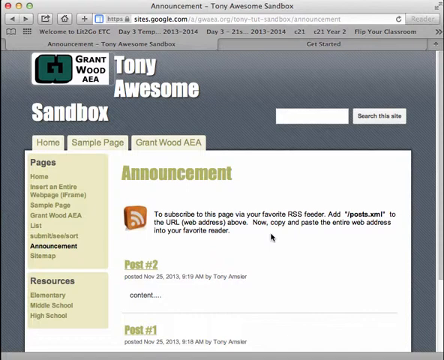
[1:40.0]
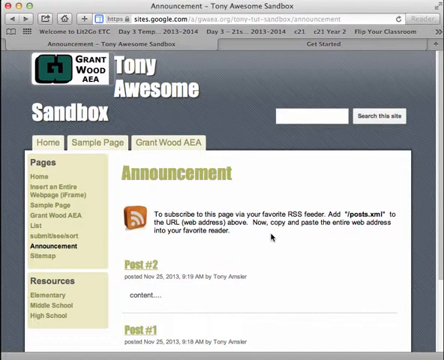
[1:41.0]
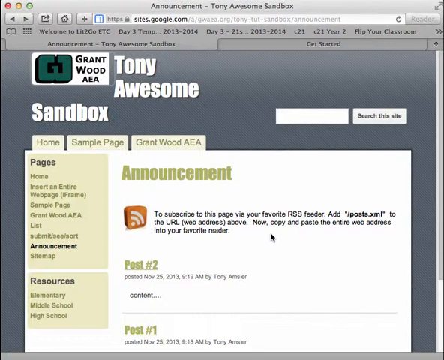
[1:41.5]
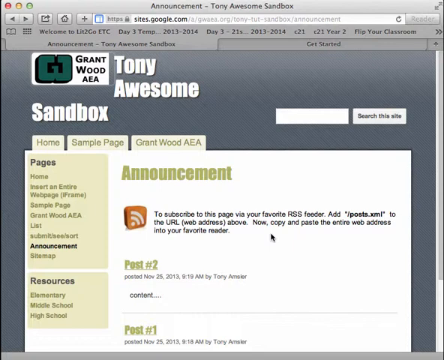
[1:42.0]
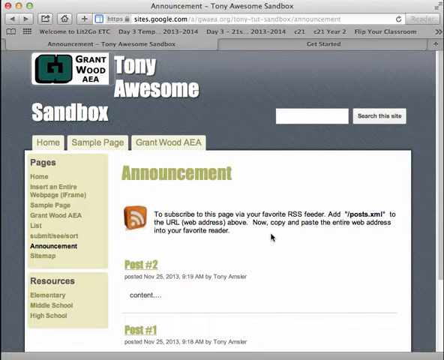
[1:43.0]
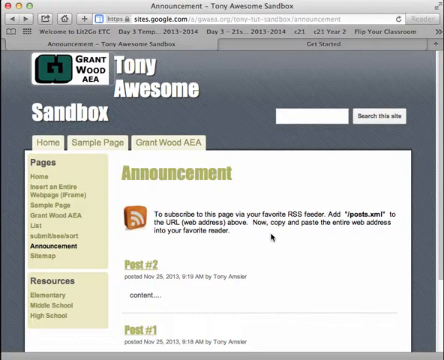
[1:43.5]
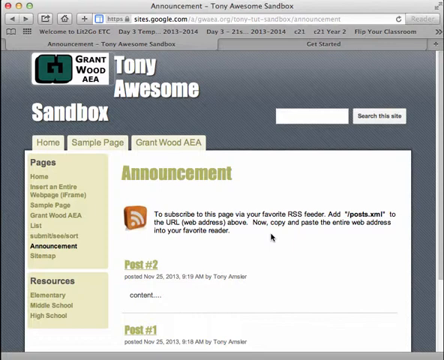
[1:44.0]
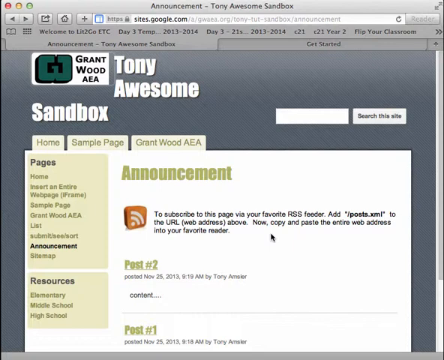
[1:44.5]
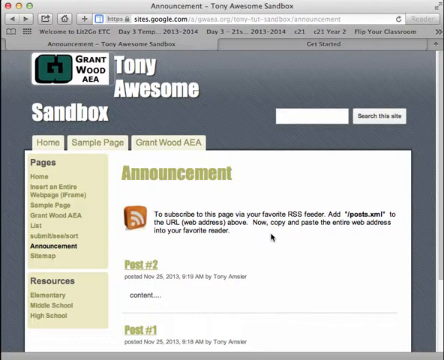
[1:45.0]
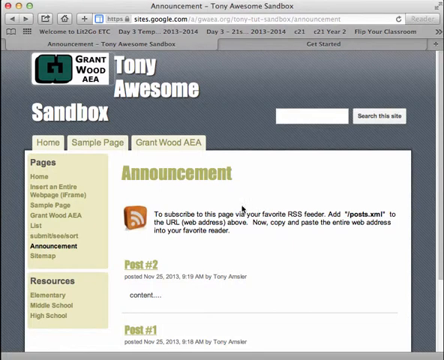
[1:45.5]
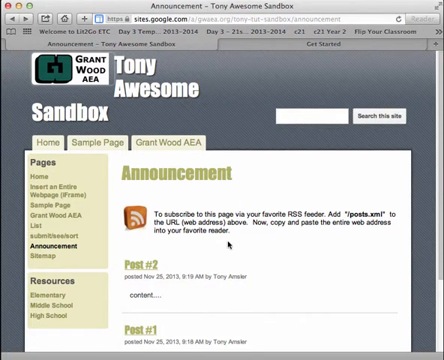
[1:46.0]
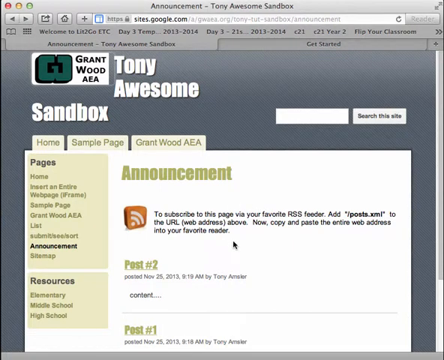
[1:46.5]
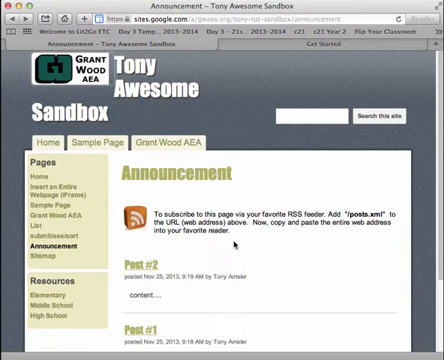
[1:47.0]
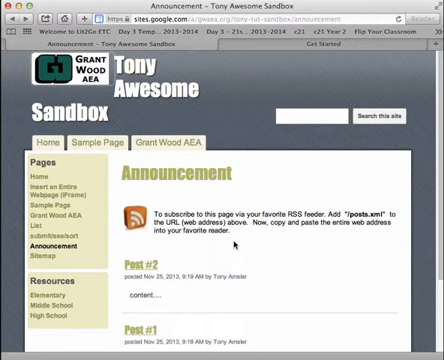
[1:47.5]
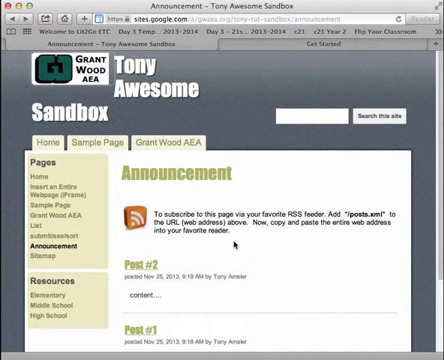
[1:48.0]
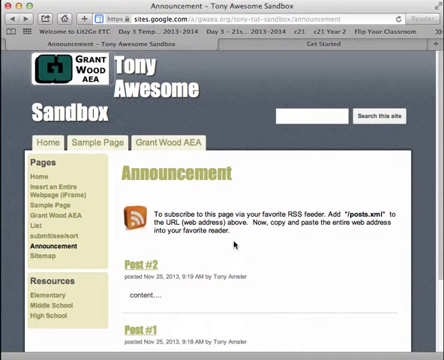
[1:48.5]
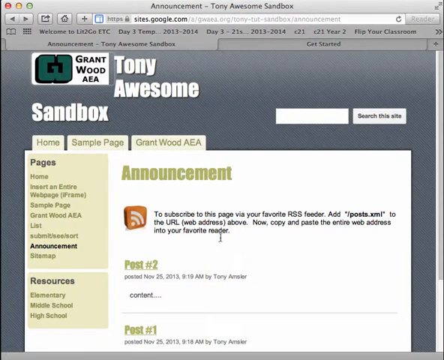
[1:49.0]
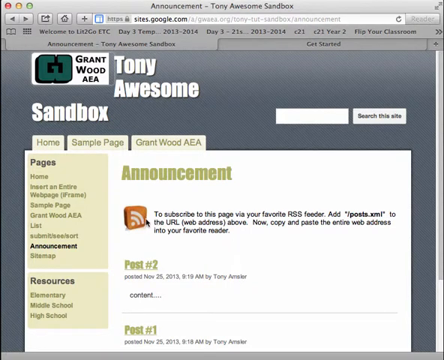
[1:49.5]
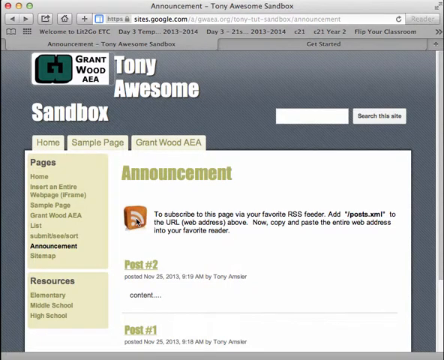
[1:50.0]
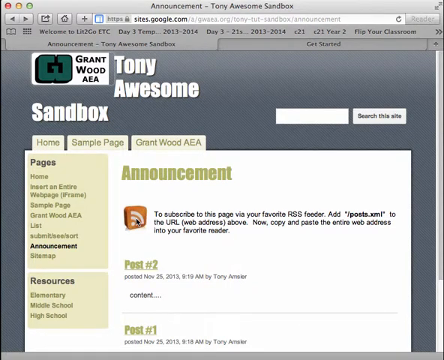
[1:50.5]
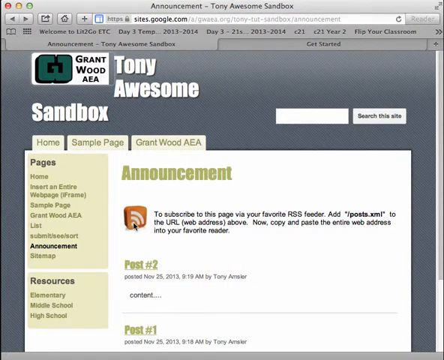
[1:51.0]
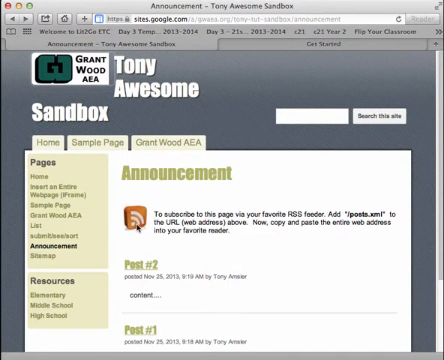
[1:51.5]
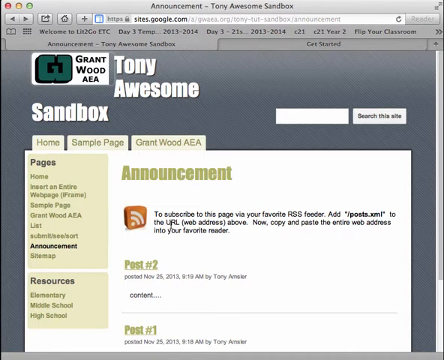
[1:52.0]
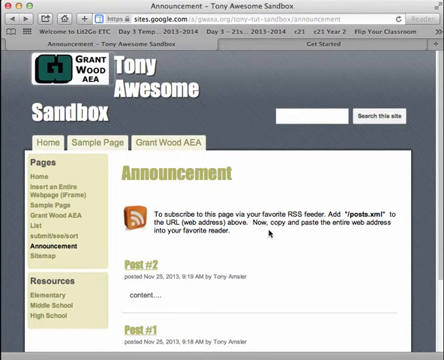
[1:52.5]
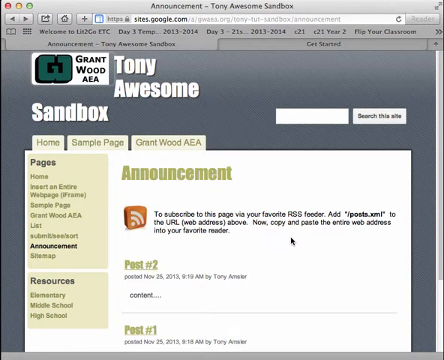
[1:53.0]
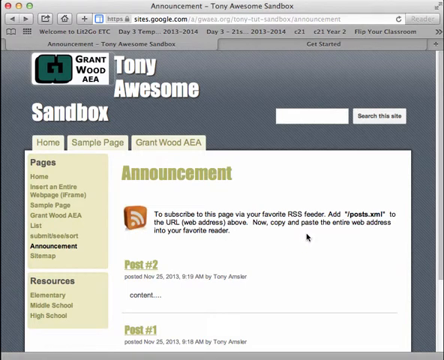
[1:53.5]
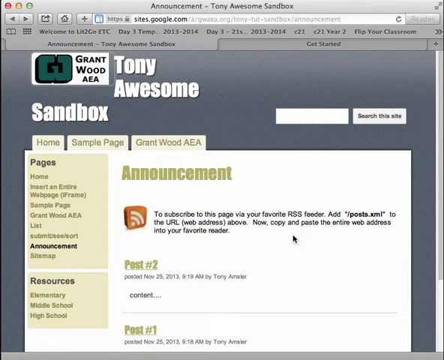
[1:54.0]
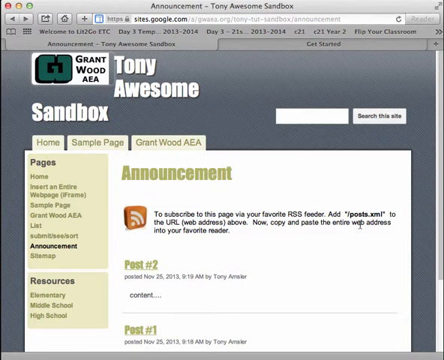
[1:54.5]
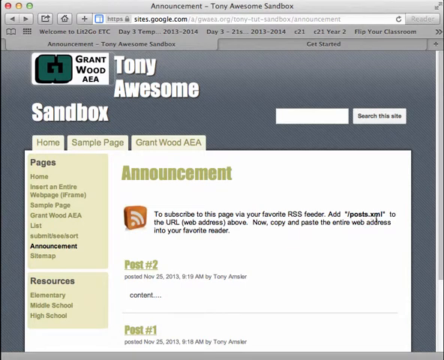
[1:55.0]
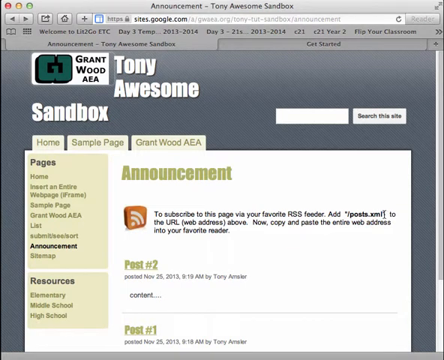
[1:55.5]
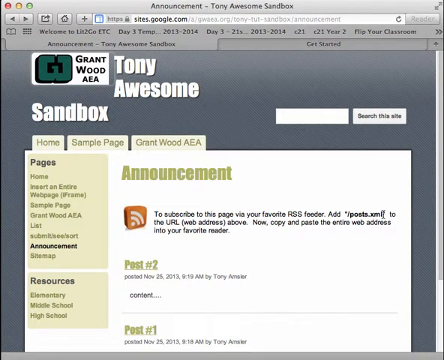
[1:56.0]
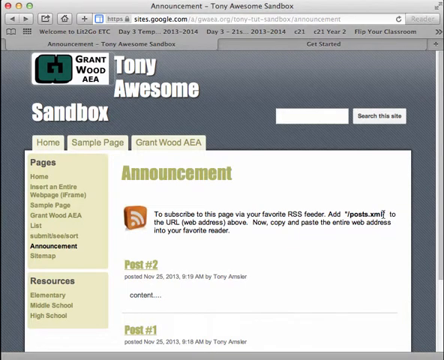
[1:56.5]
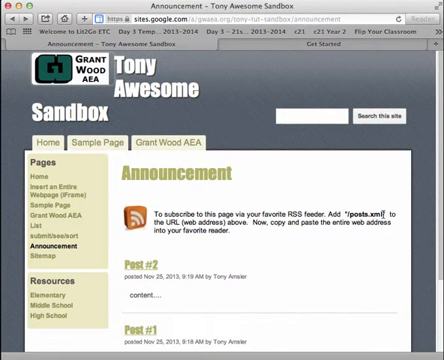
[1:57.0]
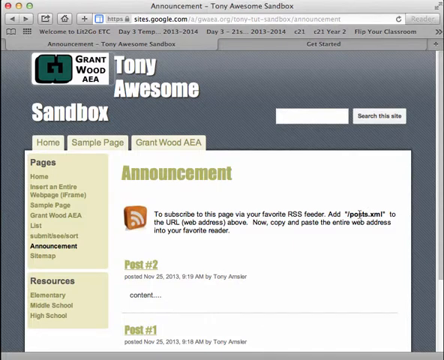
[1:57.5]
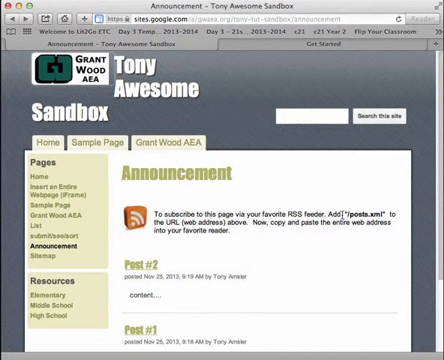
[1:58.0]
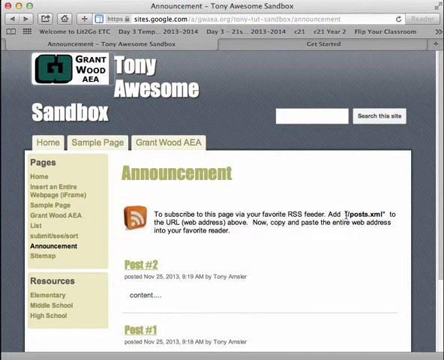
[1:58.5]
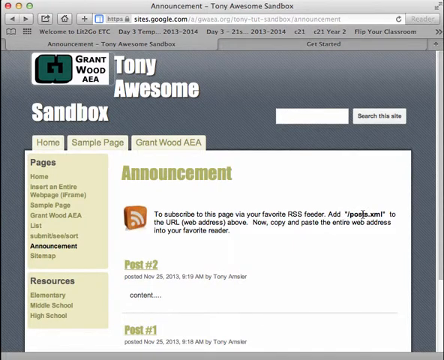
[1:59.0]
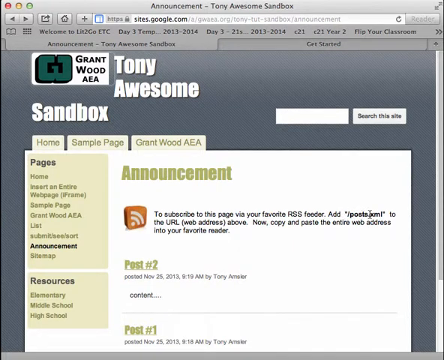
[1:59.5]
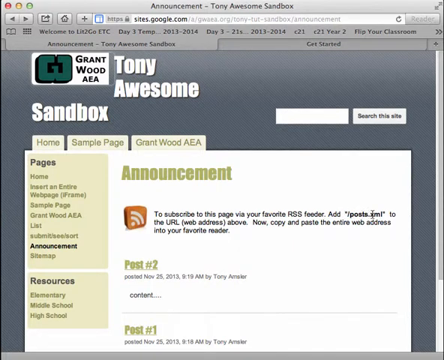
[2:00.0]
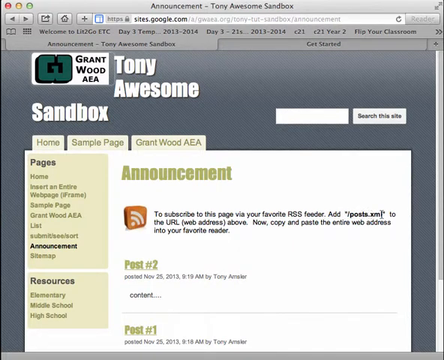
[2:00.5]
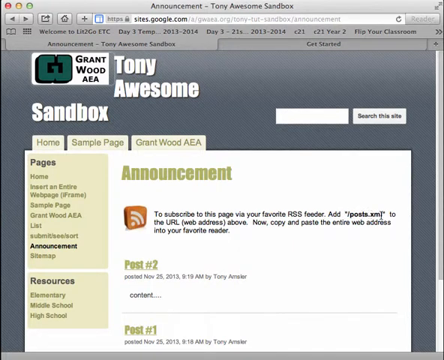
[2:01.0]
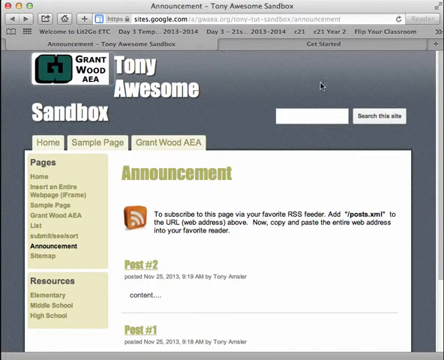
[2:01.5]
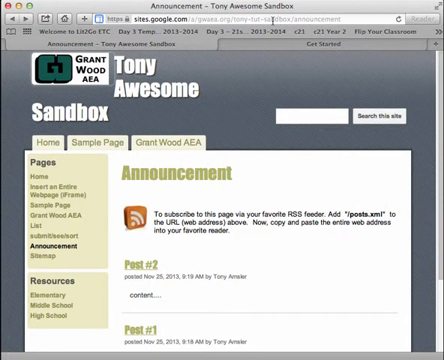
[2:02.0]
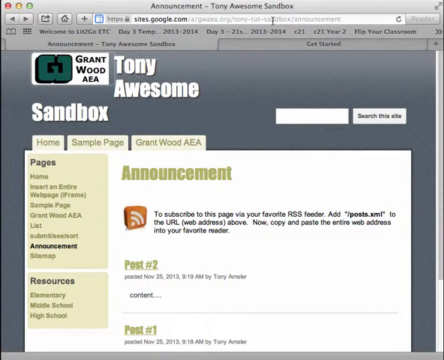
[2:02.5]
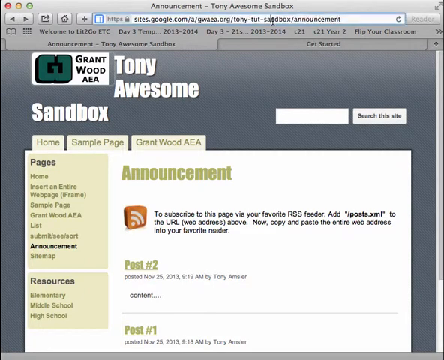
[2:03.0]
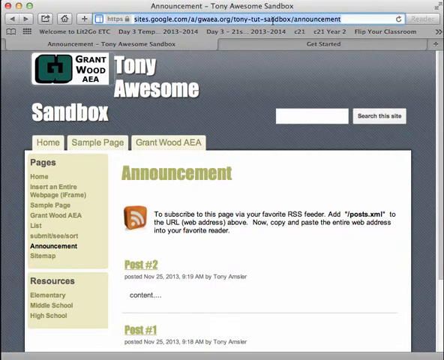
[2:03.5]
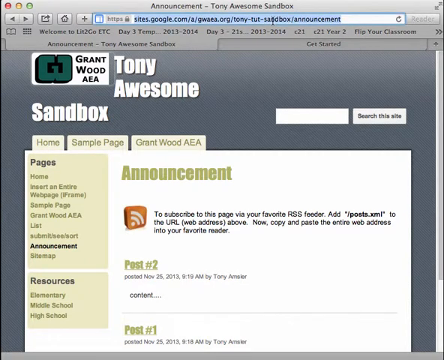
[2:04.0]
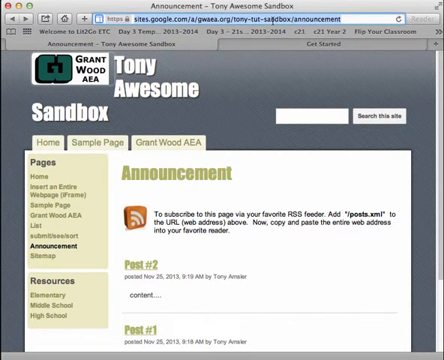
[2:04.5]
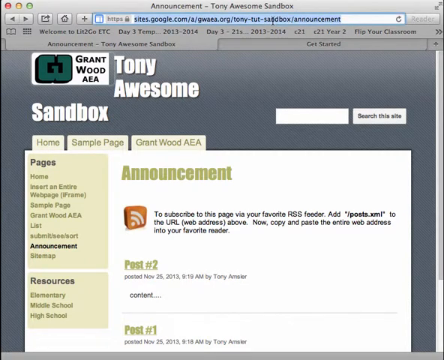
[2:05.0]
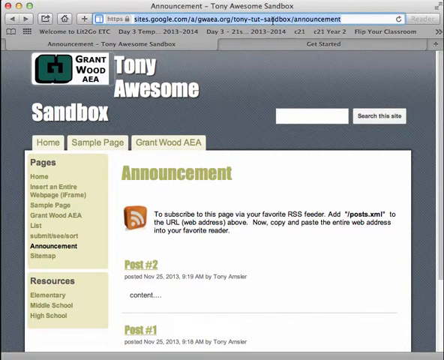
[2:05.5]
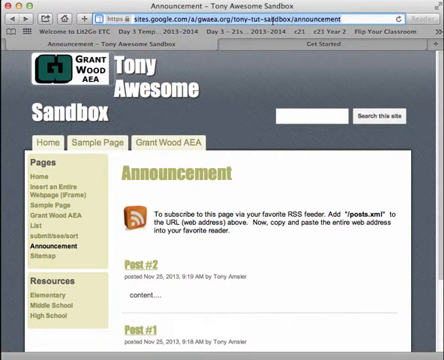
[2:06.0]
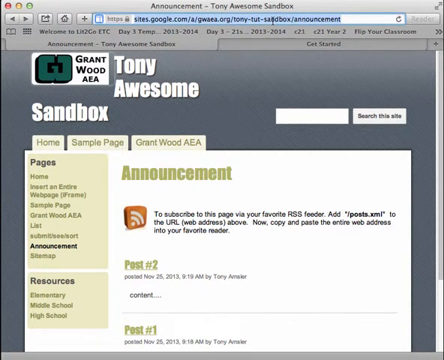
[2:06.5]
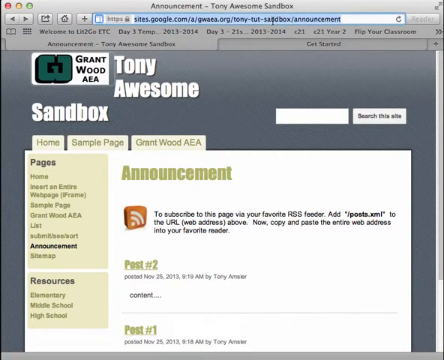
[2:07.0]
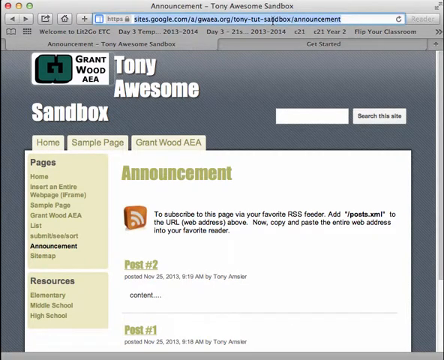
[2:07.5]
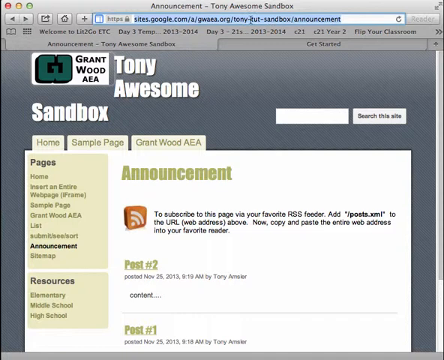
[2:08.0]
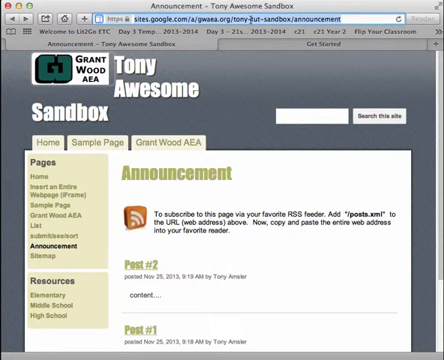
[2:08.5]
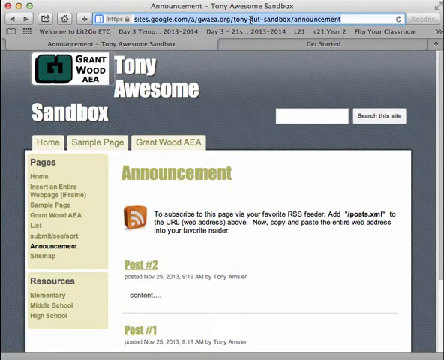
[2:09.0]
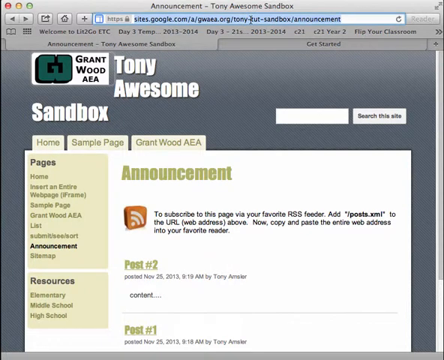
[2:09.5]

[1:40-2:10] The user keeps hovering slowly over the information under Announcement, apparently reading it. The text says "To subscribe to the page via your favorite RSS," followed by a website in parentheses, then "to the URL," another website in parentheses, and "above. Now, copy and paste the entire web address into your favorite reader." The background of the website is grey, and all of the information is written in a white box in the middle of the website. The user goes to the very top of the screen and highlights the website address, apparently copying it, possibly to paste it into a search box on another website.